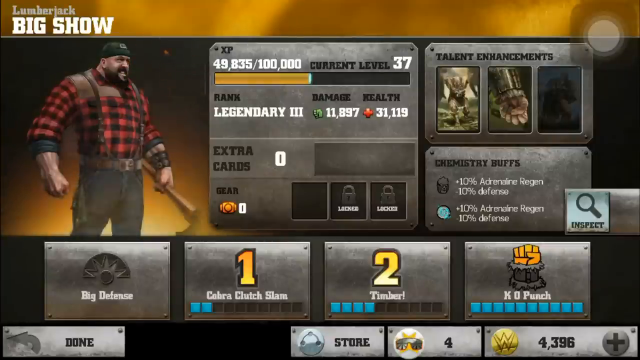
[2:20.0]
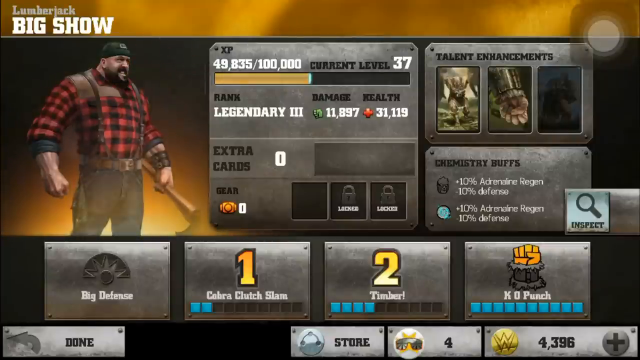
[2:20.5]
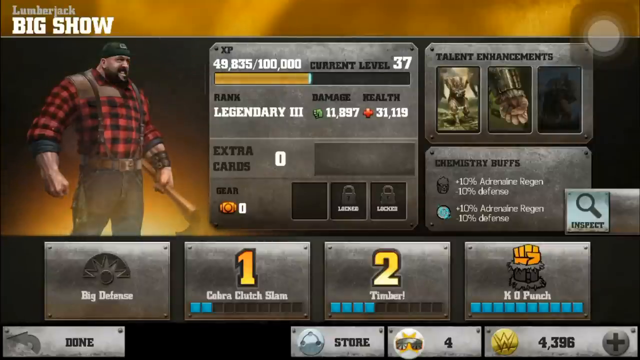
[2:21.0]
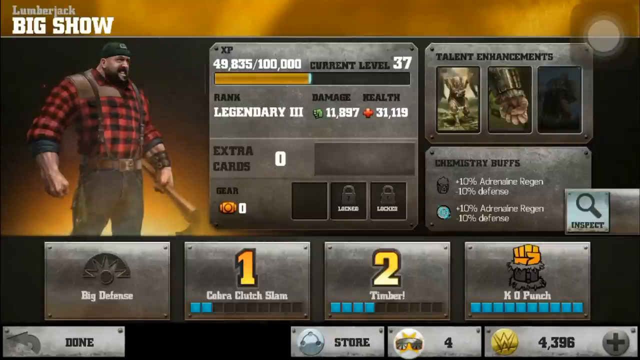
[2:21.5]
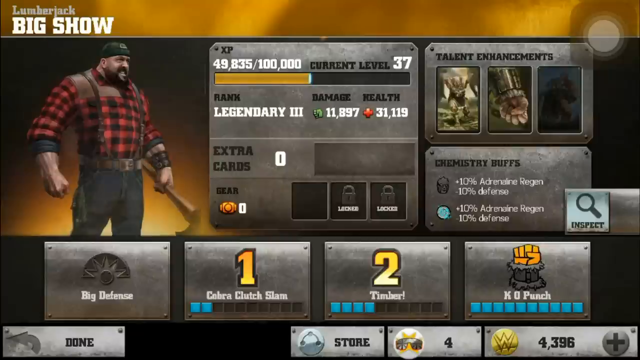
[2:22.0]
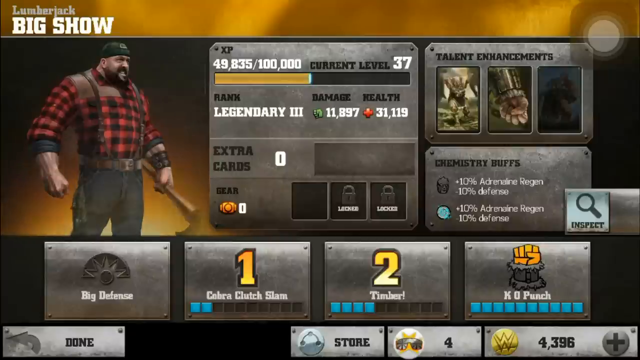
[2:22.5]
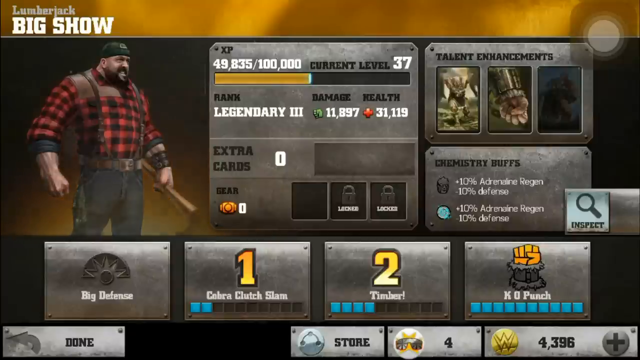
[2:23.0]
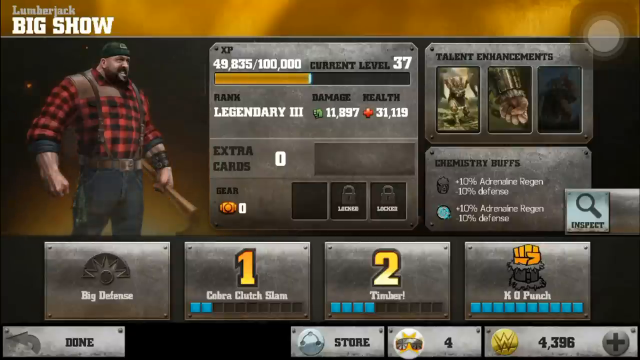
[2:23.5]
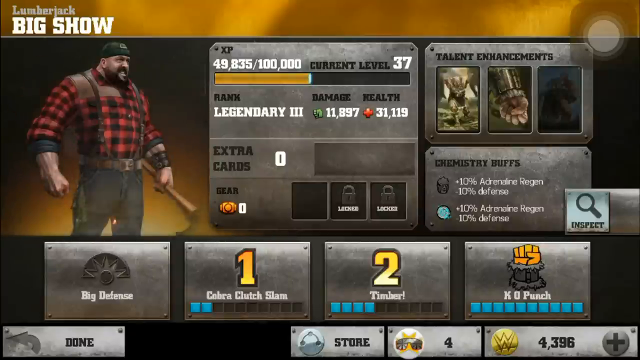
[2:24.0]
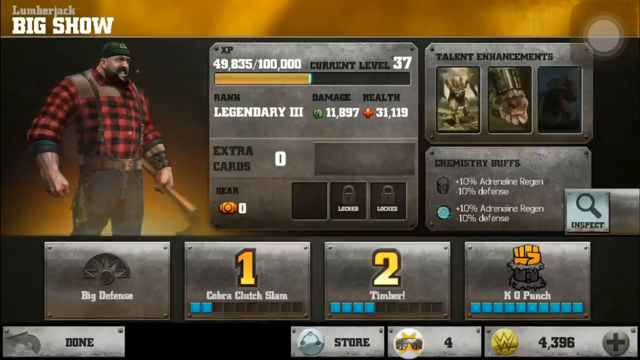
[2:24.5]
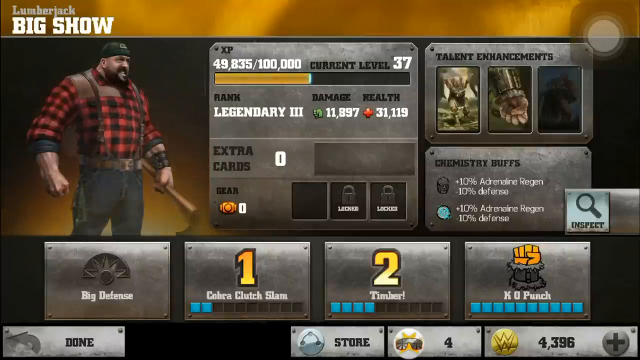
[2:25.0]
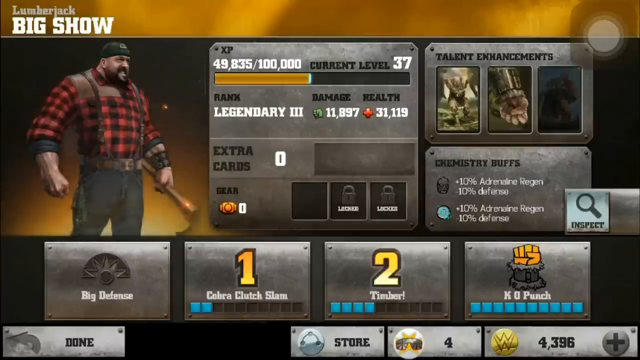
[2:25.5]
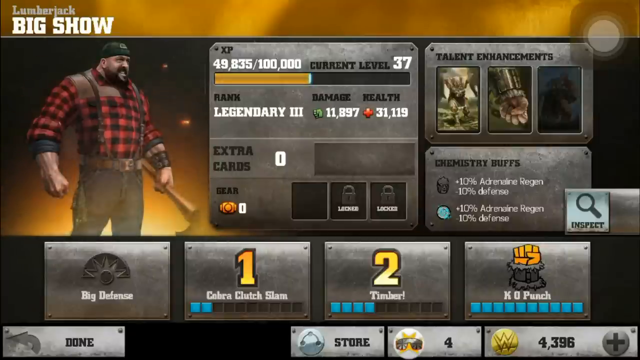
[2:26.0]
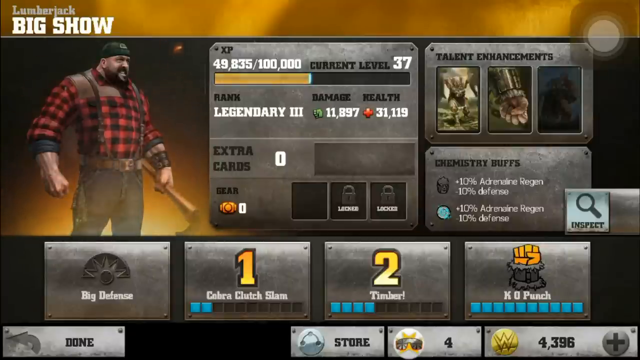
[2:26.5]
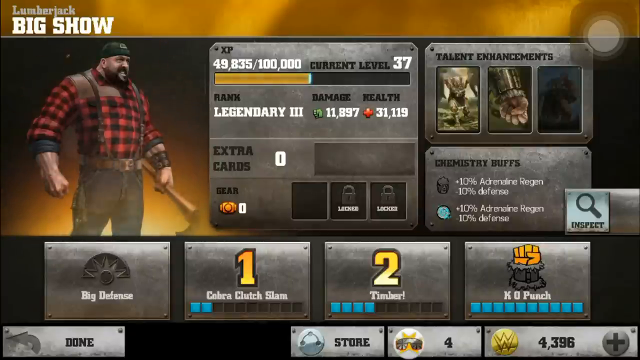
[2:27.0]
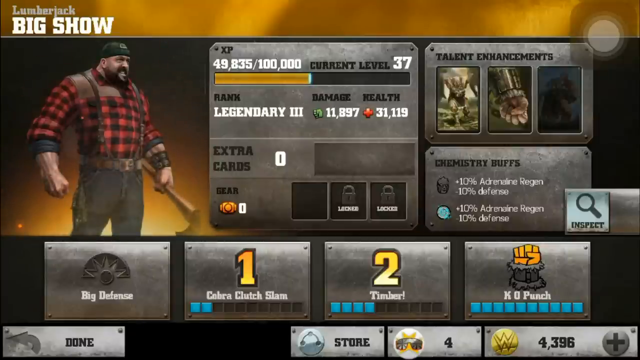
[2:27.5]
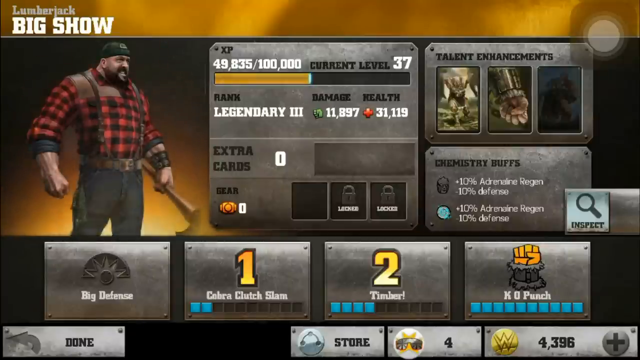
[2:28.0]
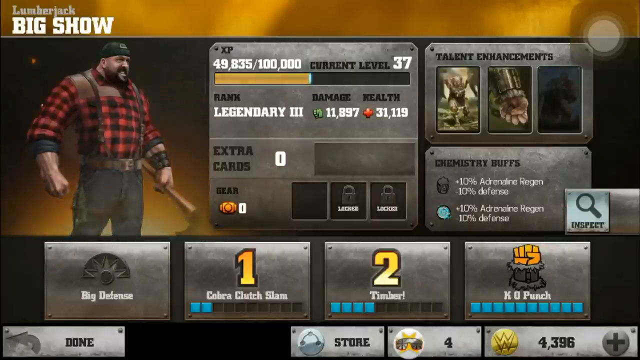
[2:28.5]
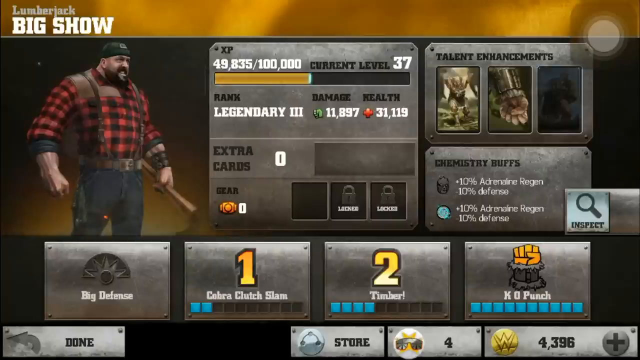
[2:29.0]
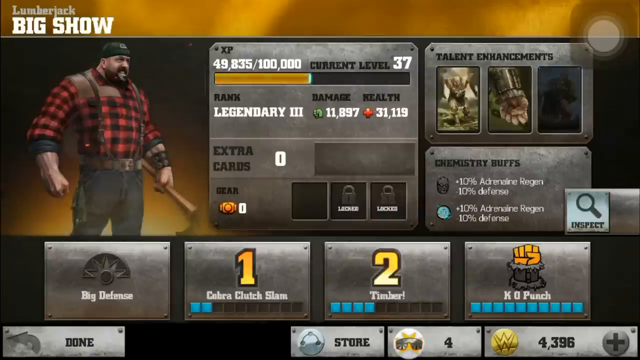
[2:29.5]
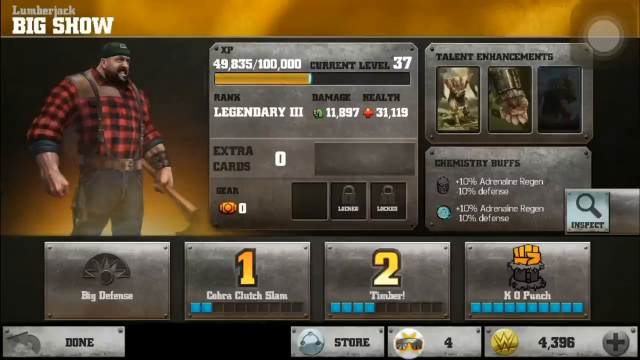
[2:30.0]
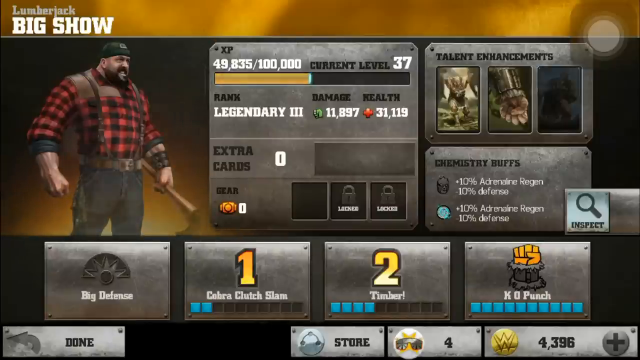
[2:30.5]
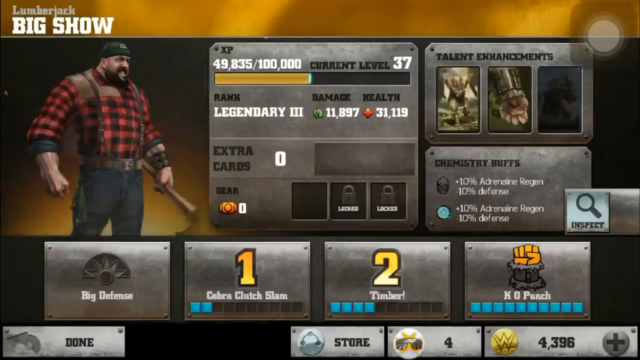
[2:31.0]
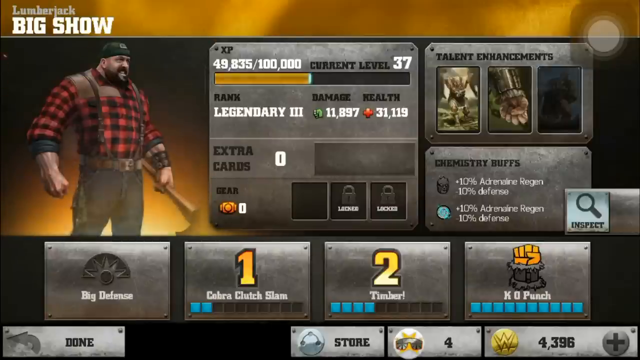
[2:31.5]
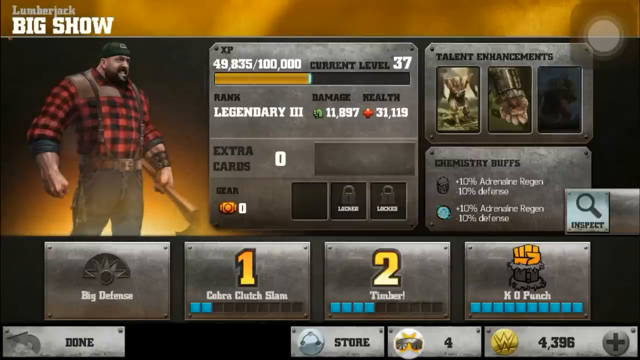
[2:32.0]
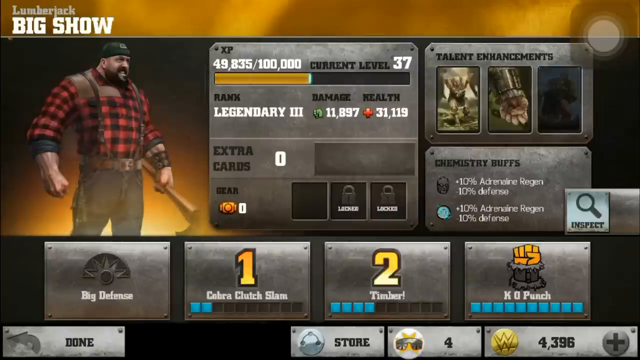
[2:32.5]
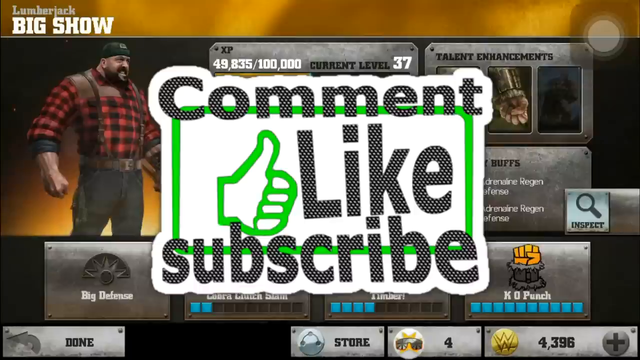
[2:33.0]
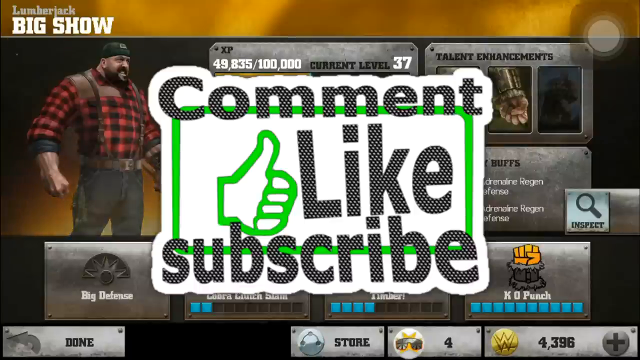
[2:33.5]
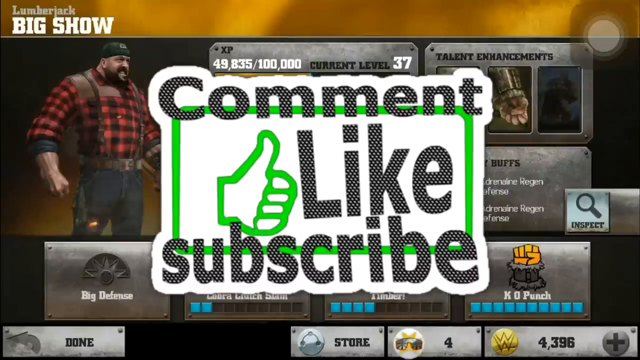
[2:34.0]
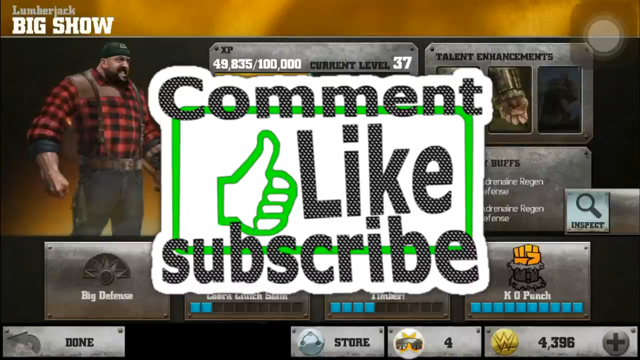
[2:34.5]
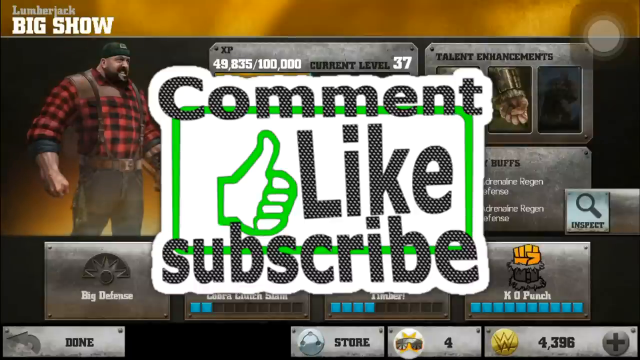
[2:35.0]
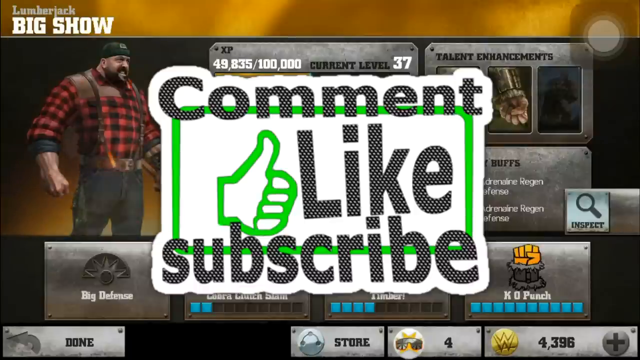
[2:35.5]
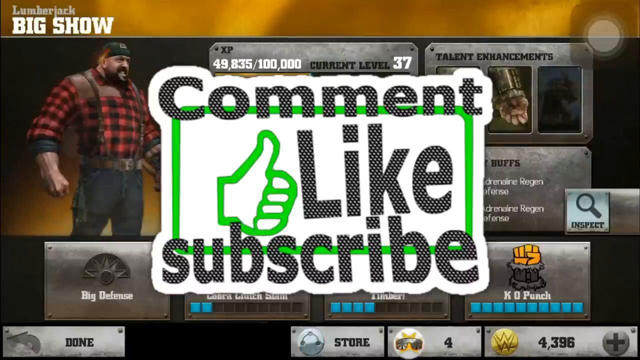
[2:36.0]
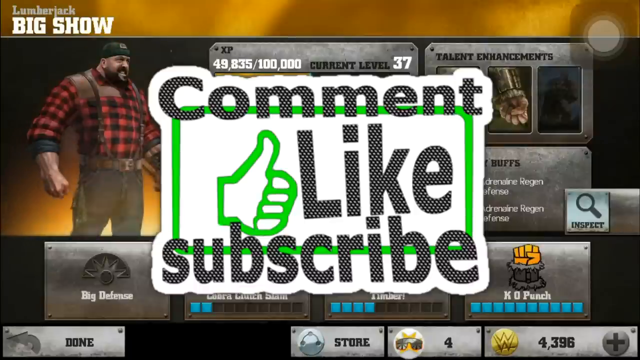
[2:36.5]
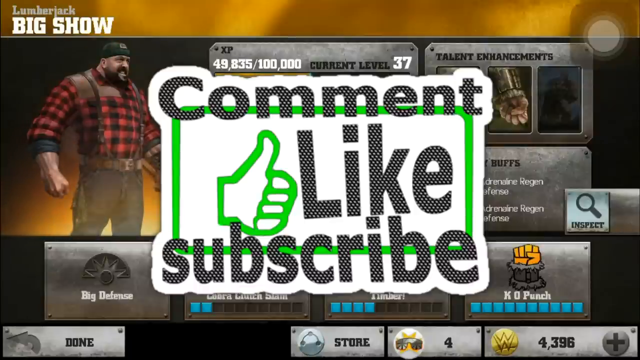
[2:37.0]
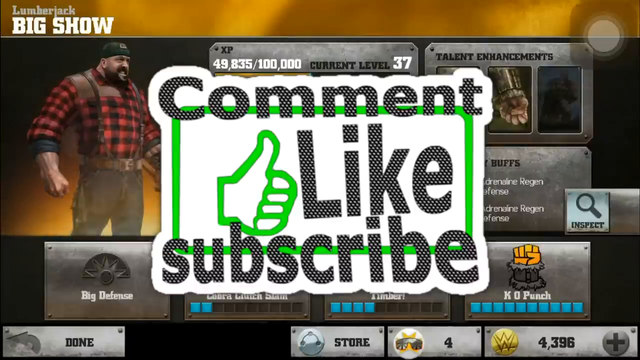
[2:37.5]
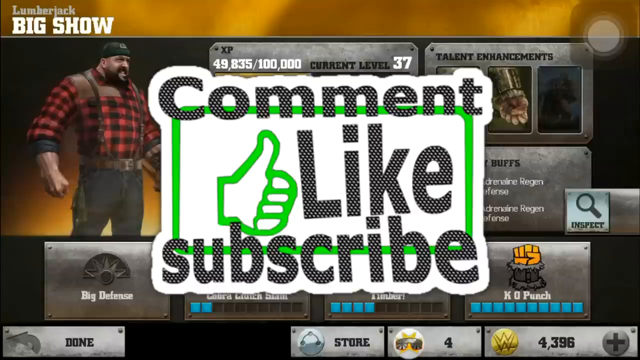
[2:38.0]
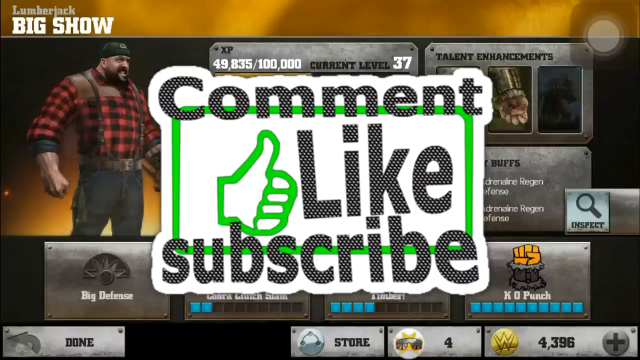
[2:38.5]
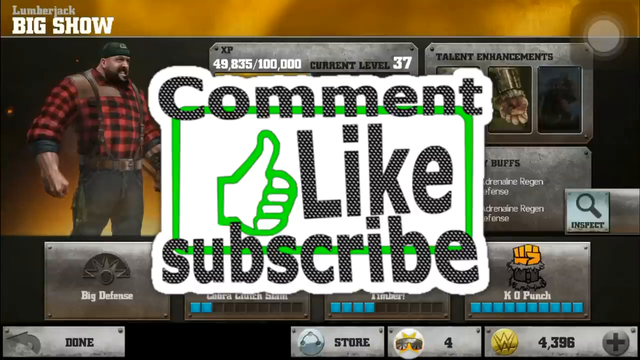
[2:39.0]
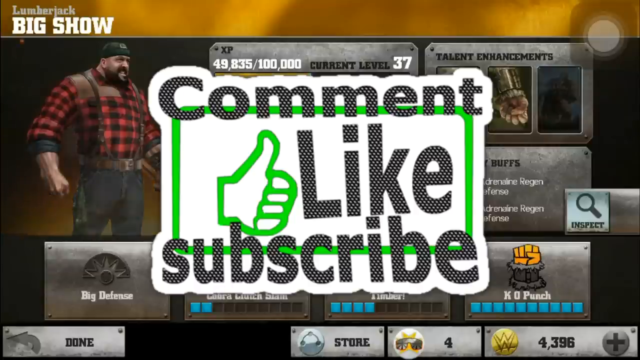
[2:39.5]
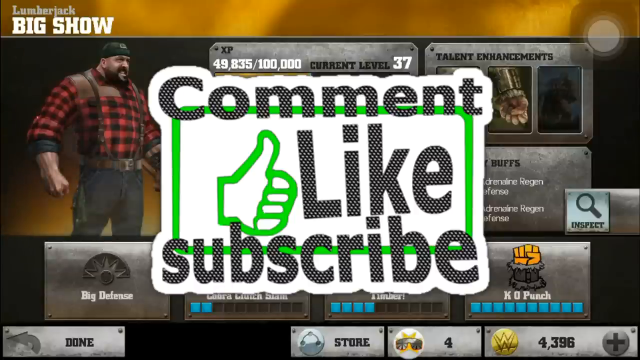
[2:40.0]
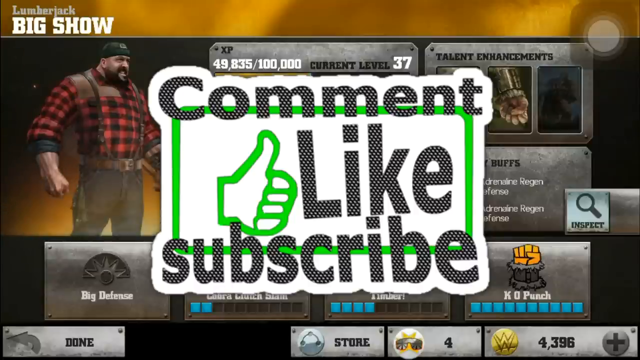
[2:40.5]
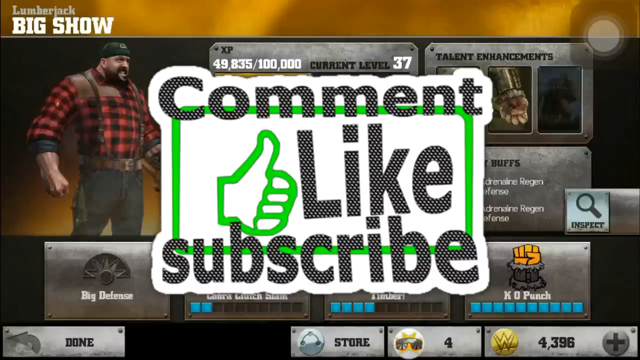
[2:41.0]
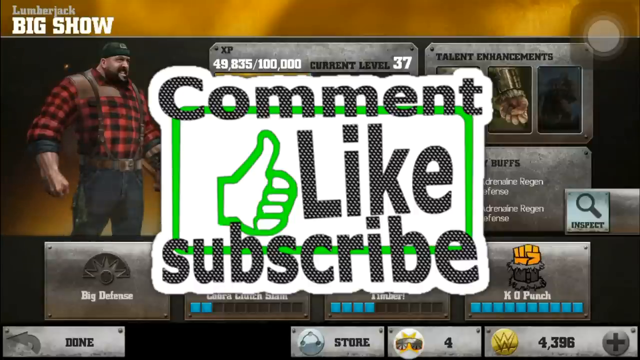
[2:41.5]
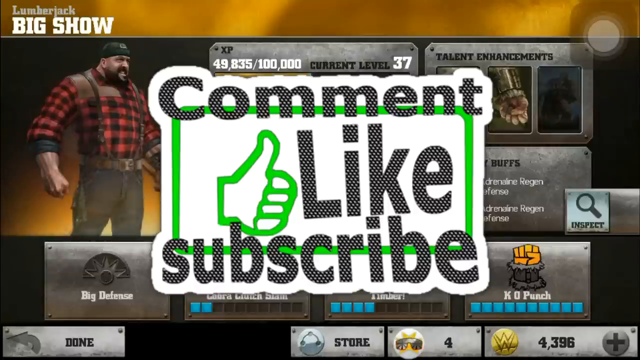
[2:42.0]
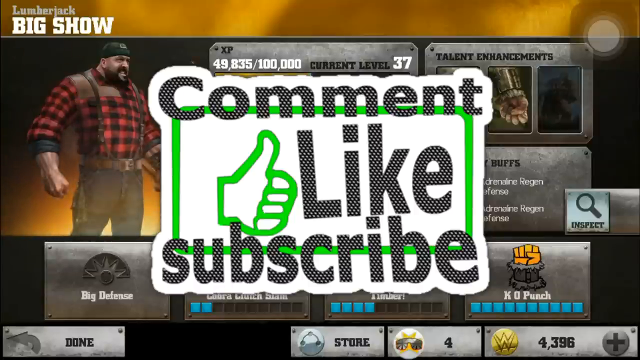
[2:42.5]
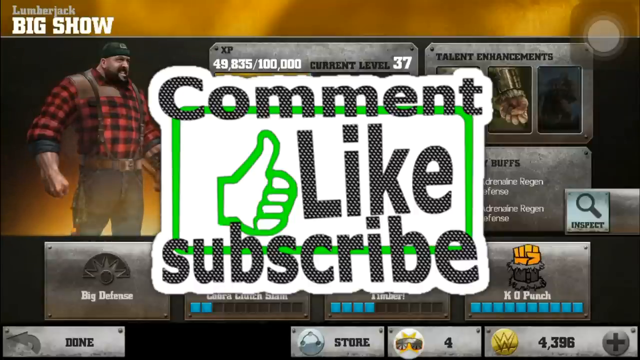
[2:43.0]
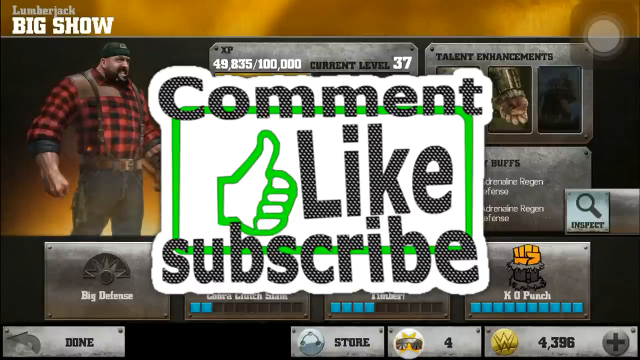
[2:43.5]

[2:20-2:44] The Lumberjack Big Show card is apparently still on screen, showing legendary rank three. At the end, text reads "comment, like, or subscribe" with a green thumbs up, apparently closing a YouTube video of someone playing a WWE wrestling card game.